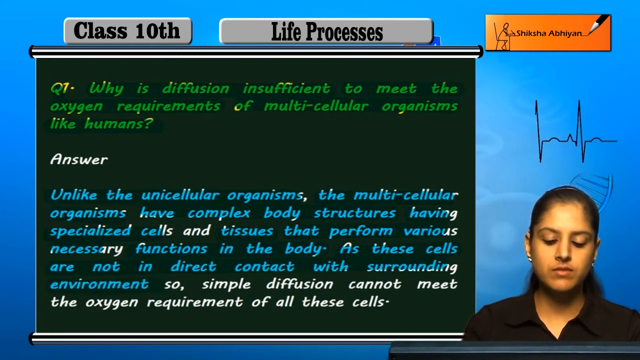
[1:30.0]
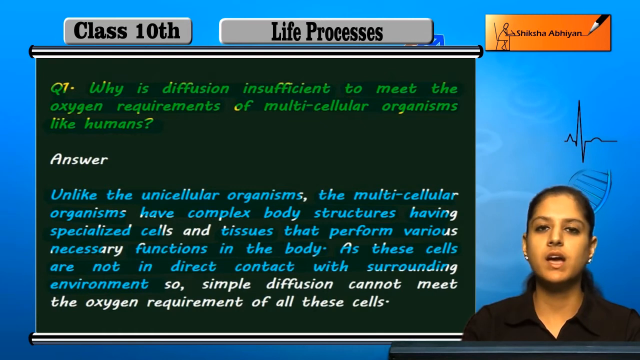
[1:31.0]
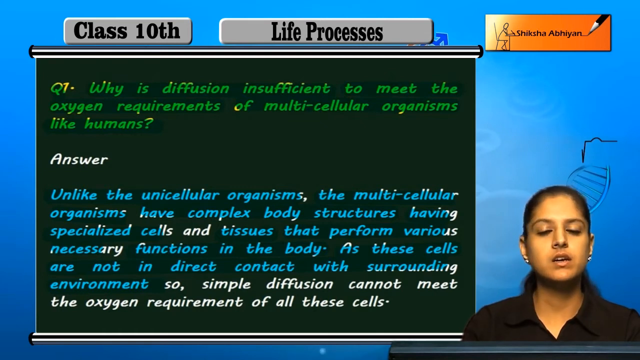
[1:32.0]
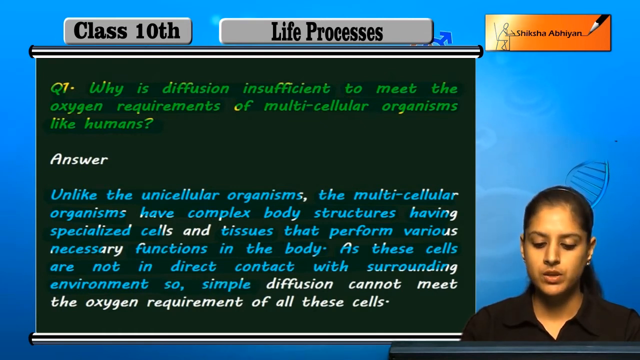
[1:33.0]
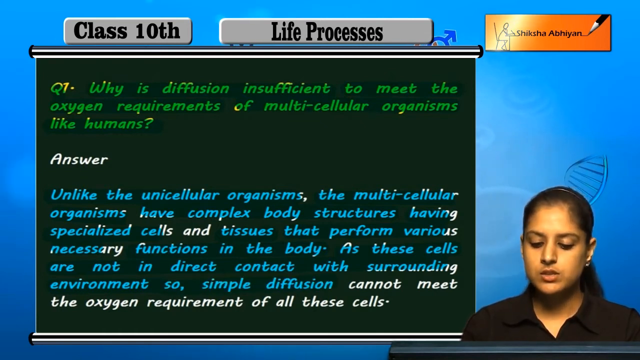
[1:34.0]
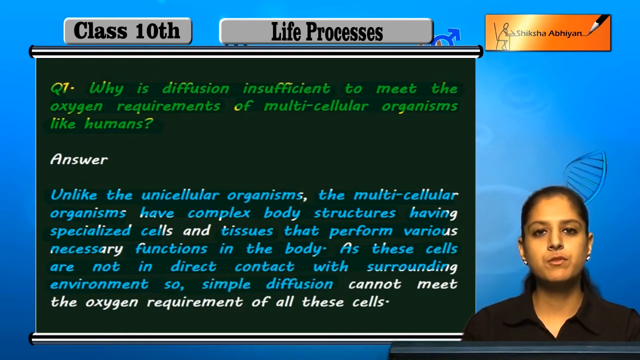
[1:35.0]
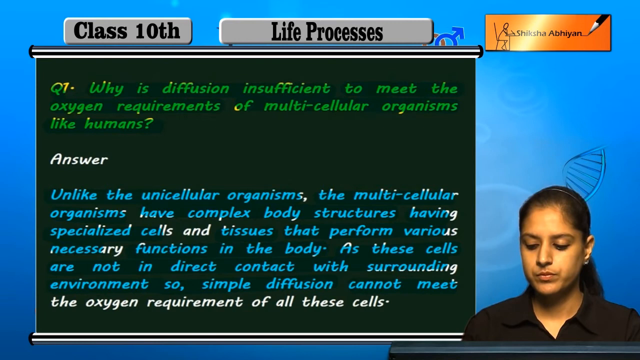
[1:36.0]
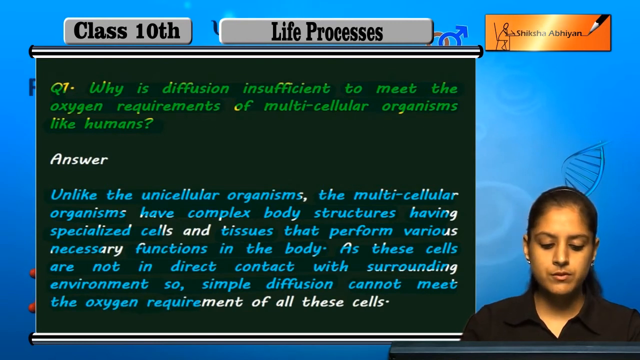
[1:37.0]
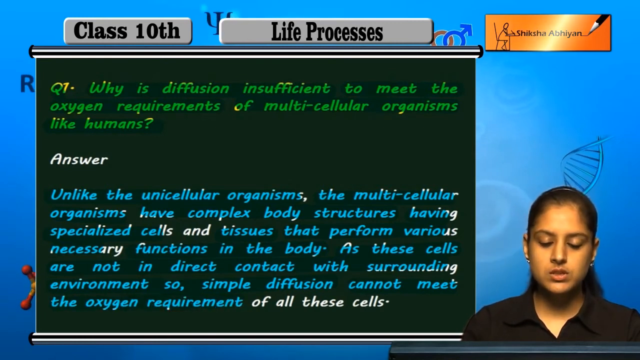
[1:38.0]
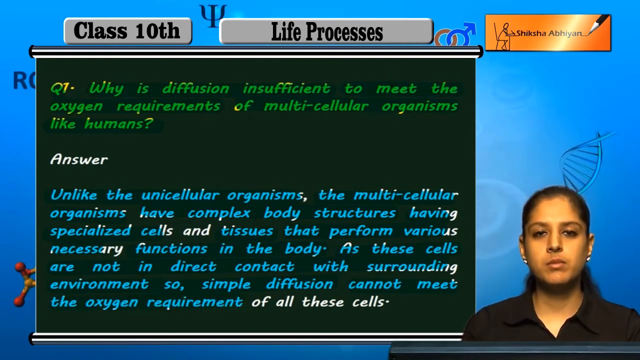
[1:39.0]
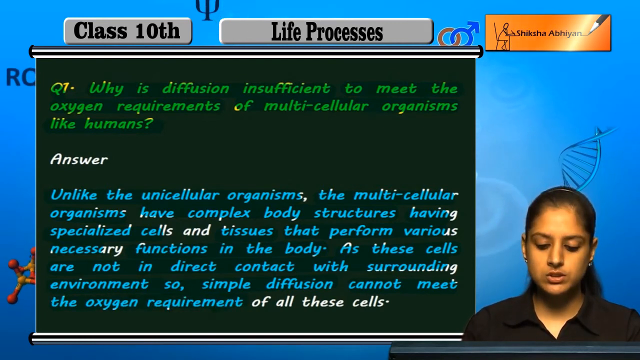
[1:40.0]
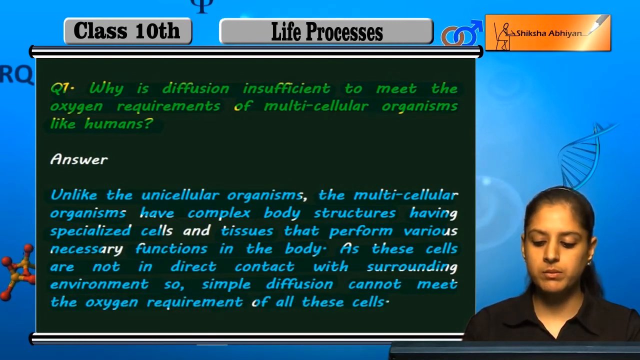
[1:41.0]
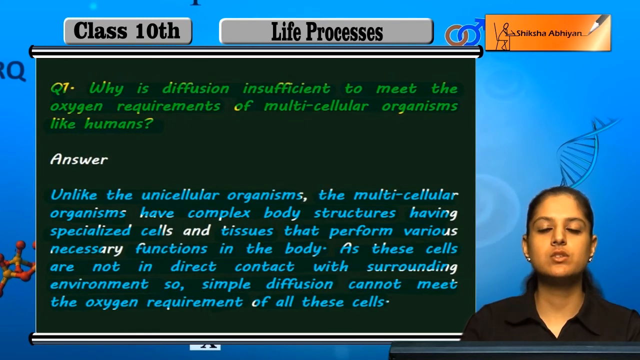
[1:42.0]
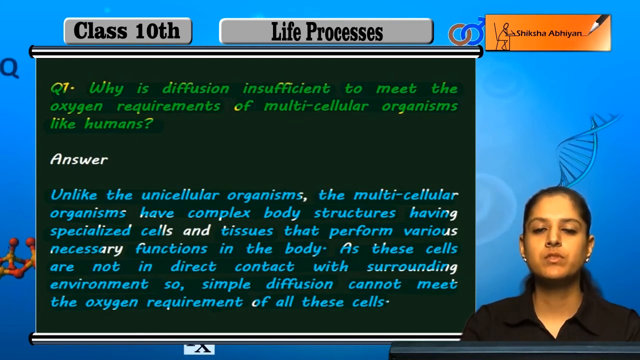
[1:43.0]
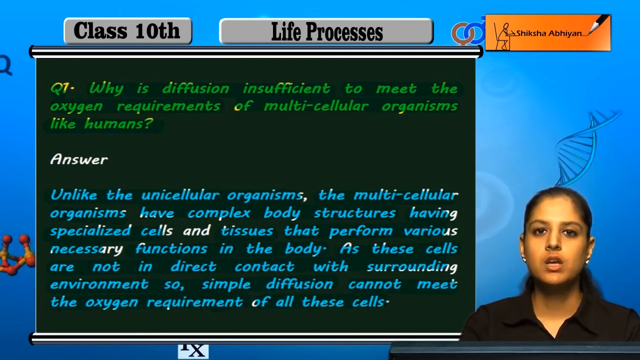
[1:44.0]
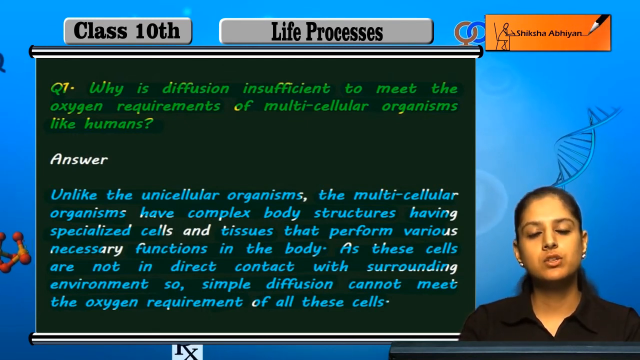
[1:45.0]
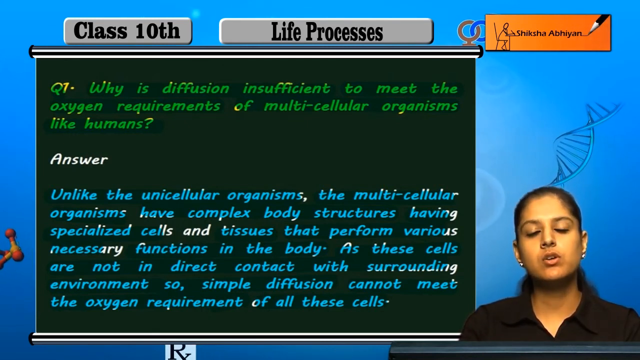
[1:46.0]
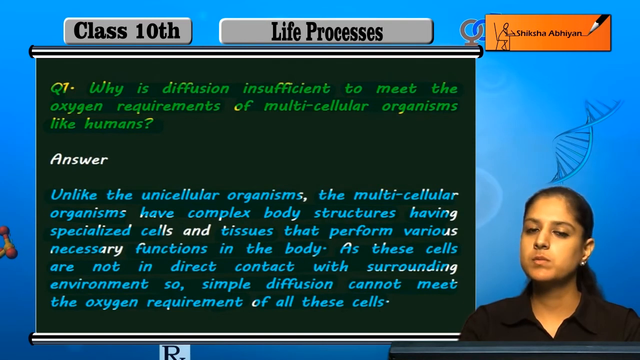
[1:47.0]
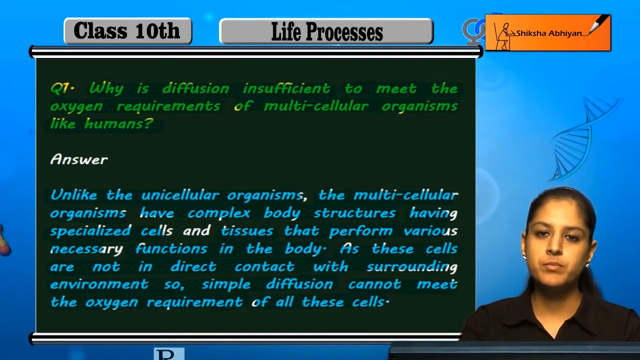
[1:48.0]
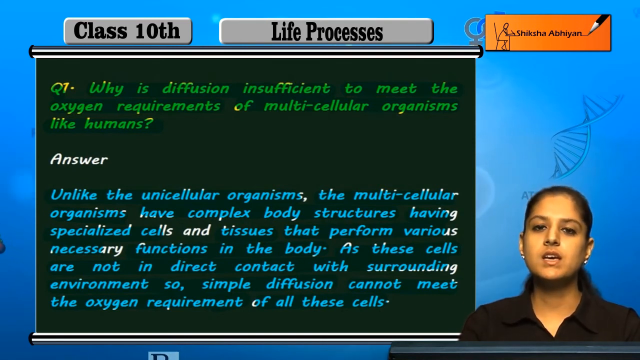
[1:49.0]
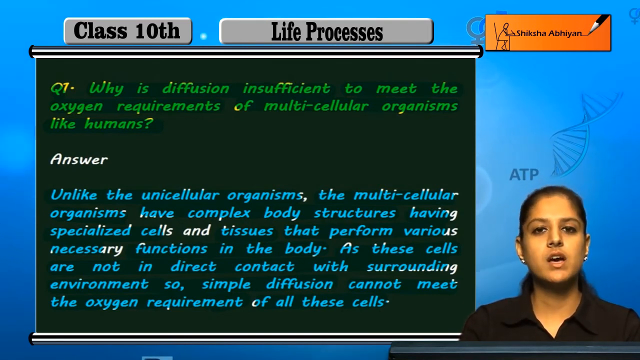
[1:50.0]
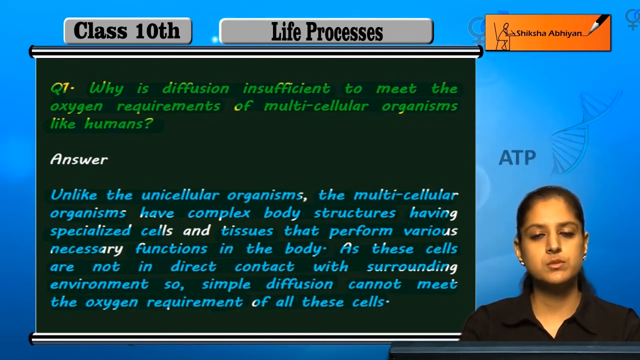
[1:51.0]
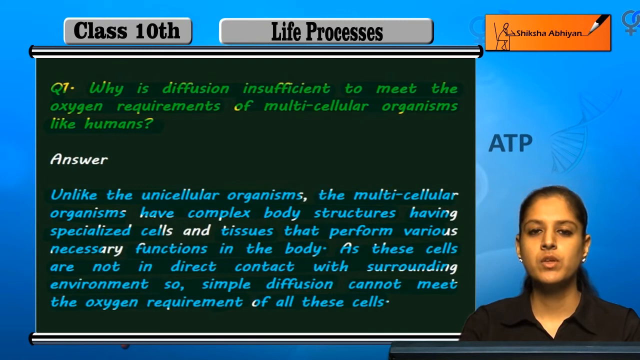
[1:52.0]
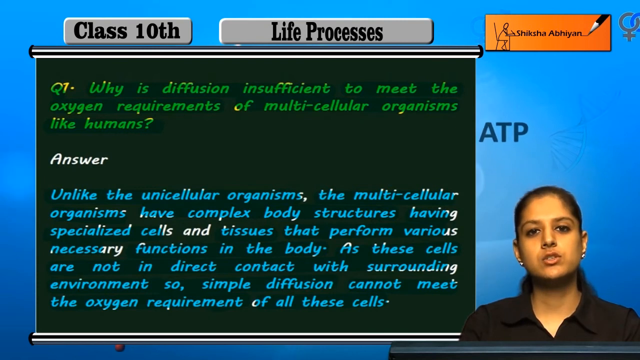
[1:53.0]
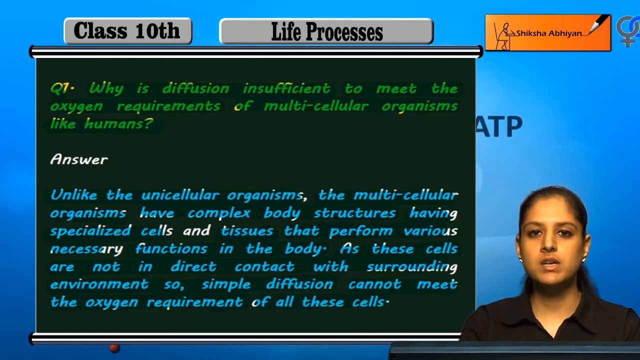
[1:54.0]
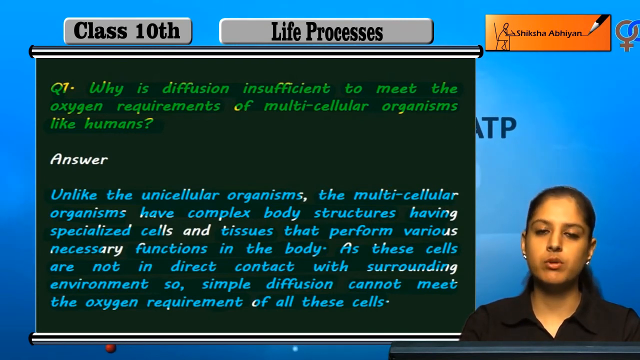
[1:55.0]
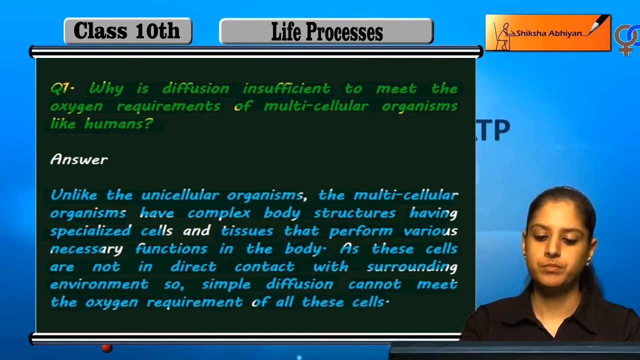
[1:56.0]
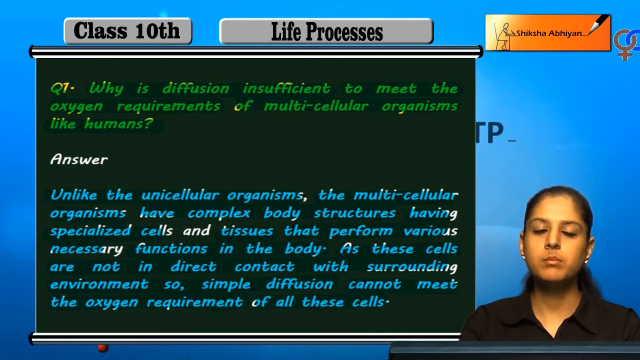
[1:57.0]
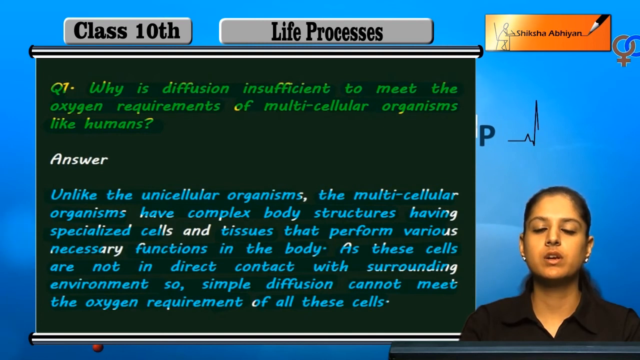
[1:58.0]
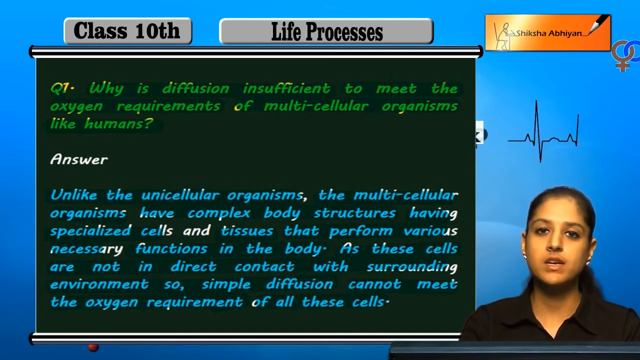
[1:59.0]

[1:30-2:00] The woman in the lower right part of the screen is still reading through the answer, and the text is highlighted in blue as she reads the words. The answer reads: "Unlike the unicellular organisms, the multicellular organisms have complex body structures, having specialized cells and tissues that perform various necessary functions in the body. As these cells are not in the direct contact with surrounding environment, so simple diffusion cannot meet the oxygen requirements of all of these cells." The question posted at the top of the board reads: "Why is diffusion insufficient to meet the oxygen requirements of multicellular organisms like humans?" The lesson is most likely aimed at people learning biology, as an online class.